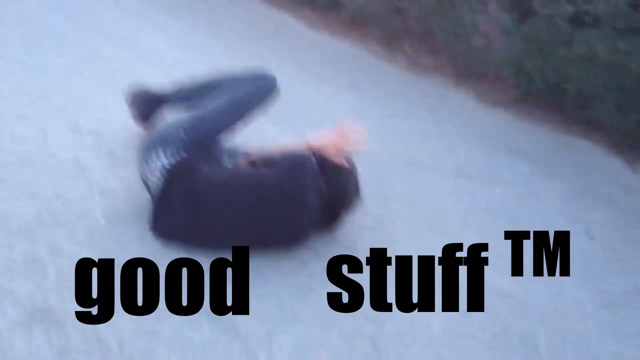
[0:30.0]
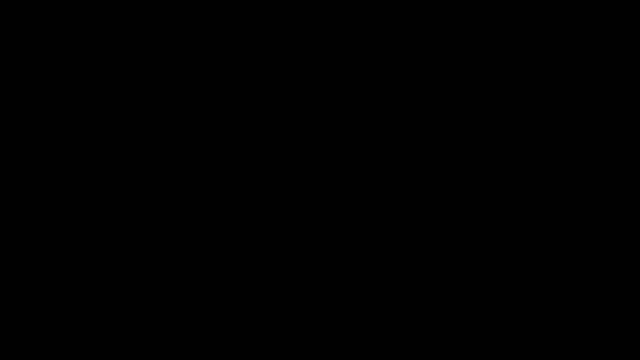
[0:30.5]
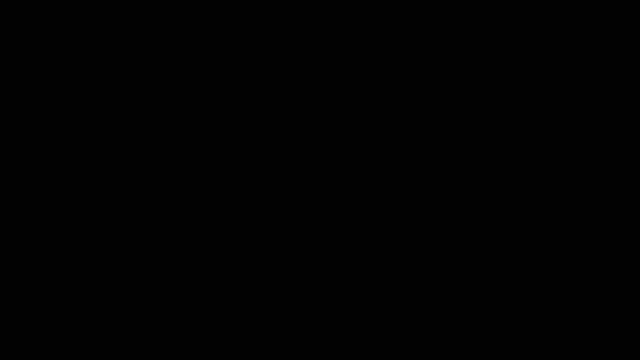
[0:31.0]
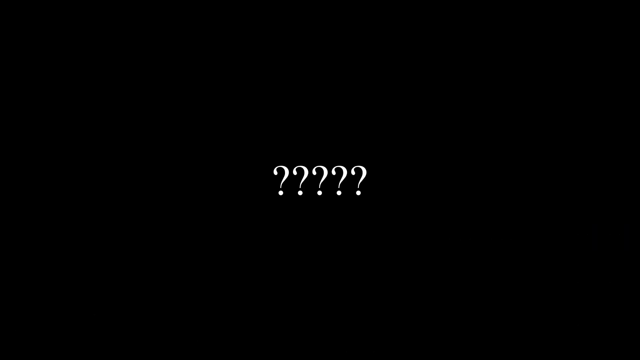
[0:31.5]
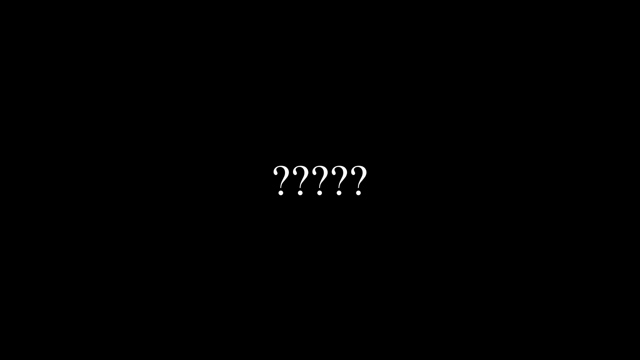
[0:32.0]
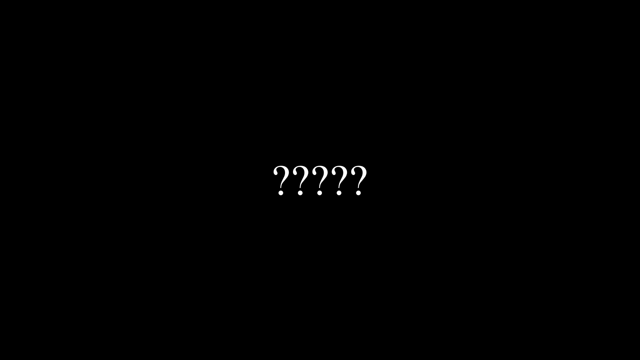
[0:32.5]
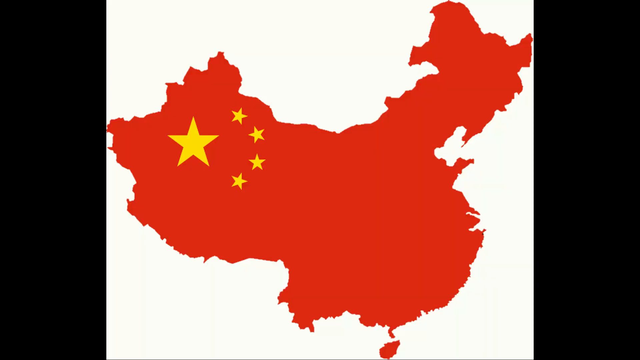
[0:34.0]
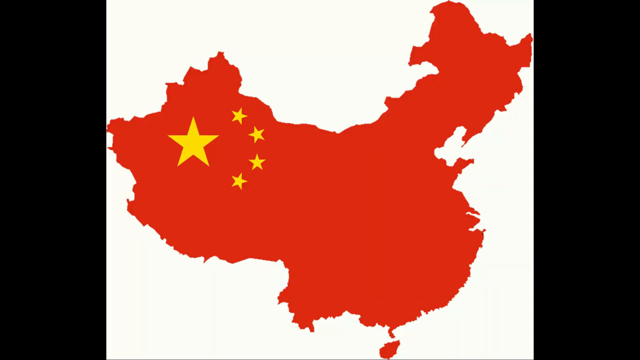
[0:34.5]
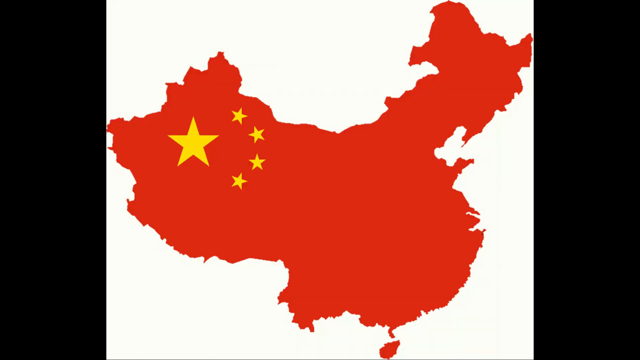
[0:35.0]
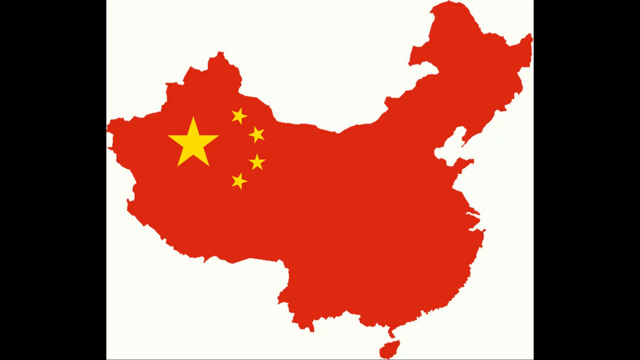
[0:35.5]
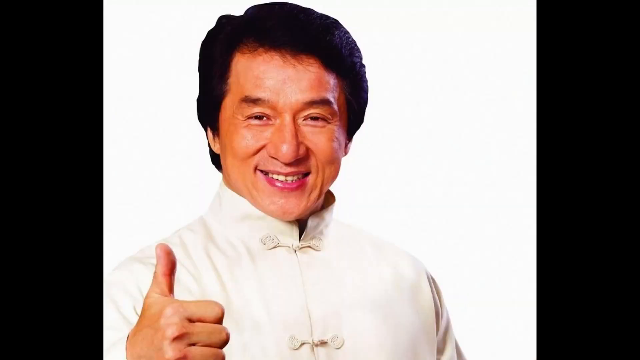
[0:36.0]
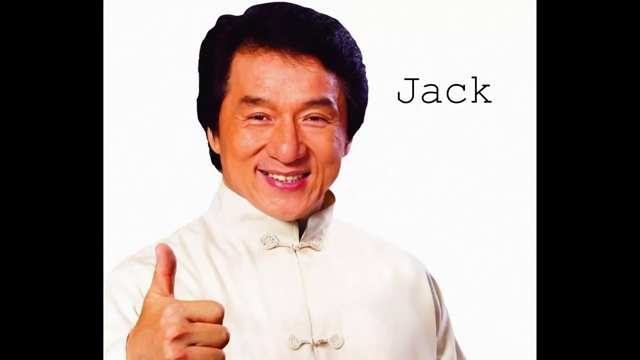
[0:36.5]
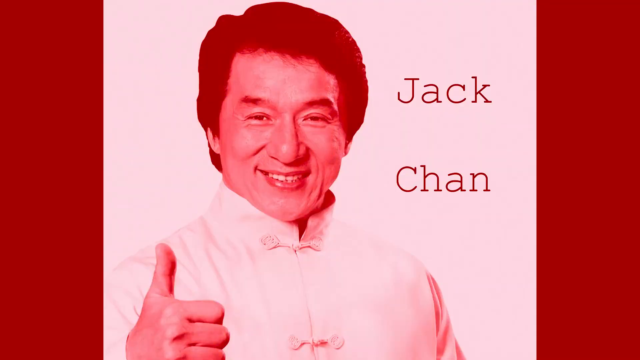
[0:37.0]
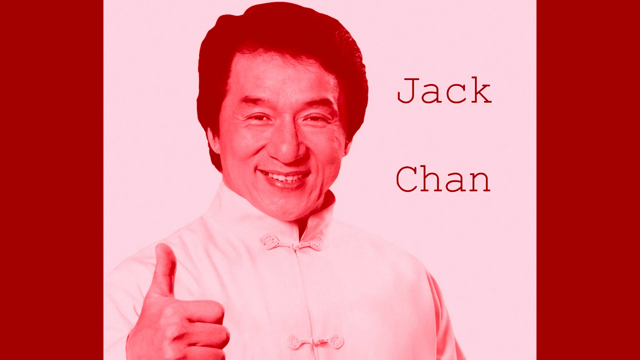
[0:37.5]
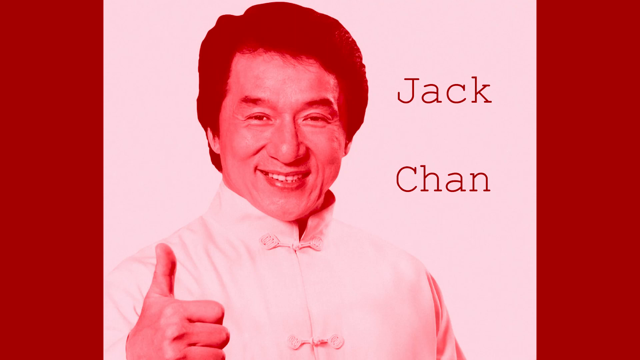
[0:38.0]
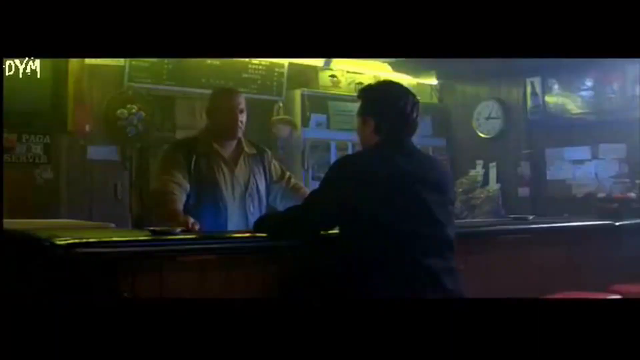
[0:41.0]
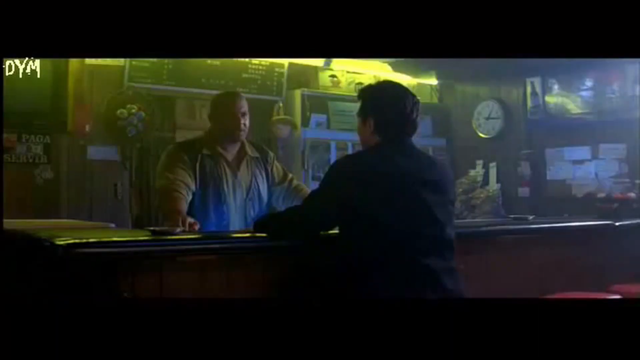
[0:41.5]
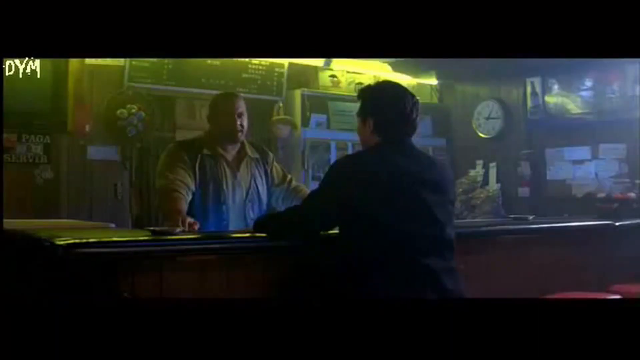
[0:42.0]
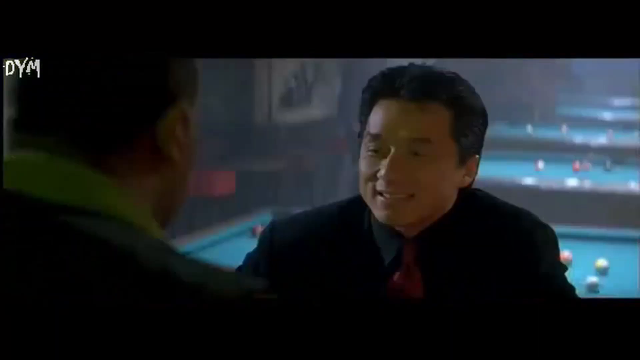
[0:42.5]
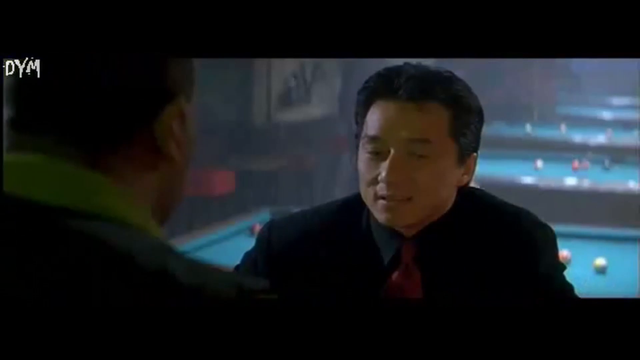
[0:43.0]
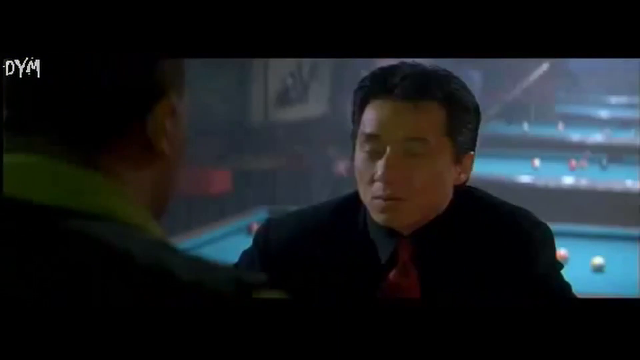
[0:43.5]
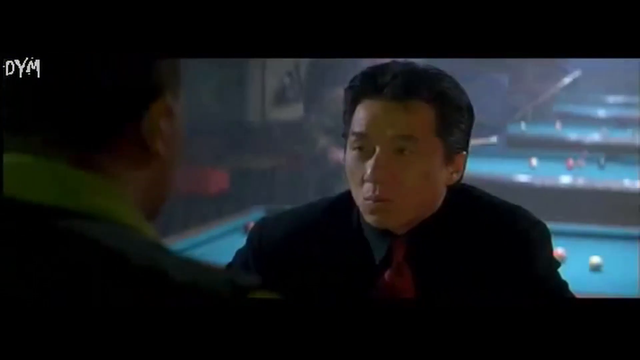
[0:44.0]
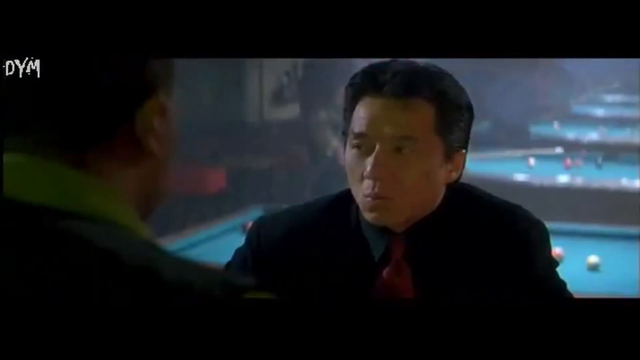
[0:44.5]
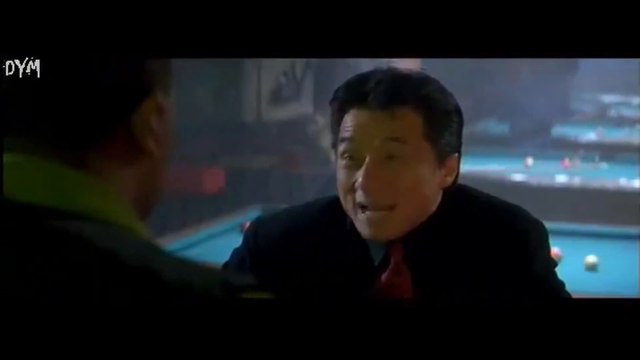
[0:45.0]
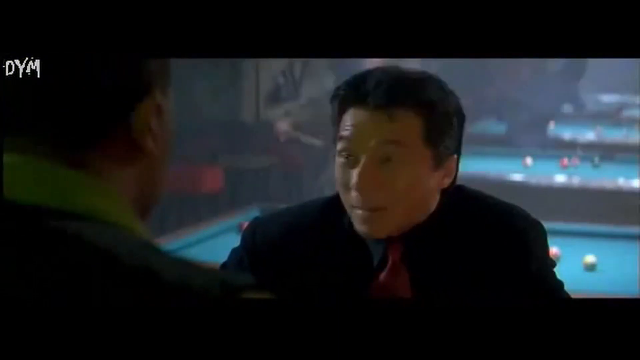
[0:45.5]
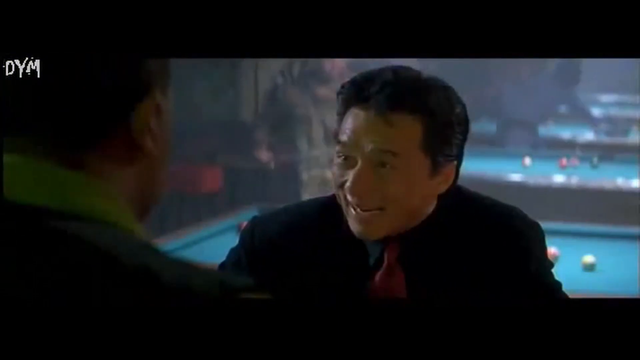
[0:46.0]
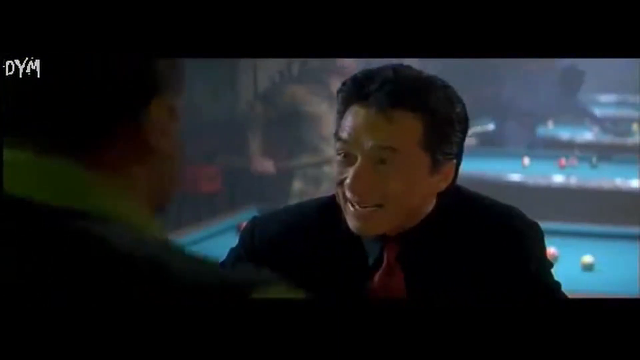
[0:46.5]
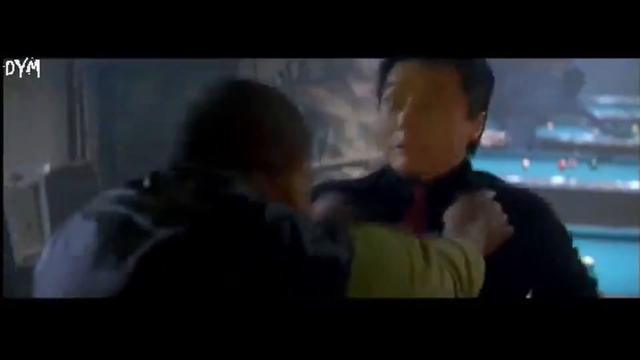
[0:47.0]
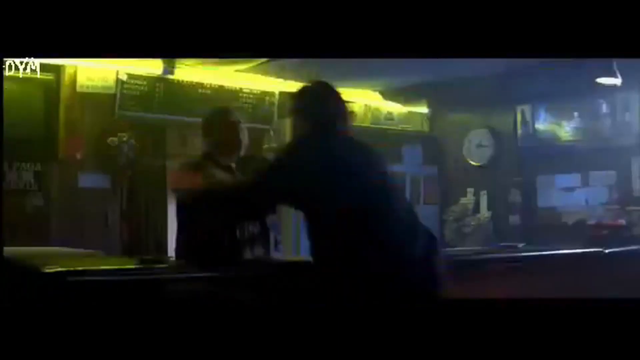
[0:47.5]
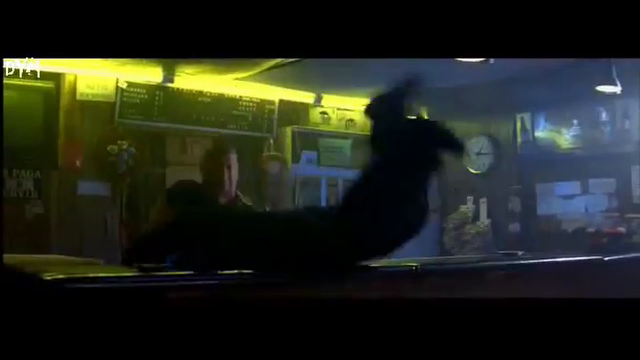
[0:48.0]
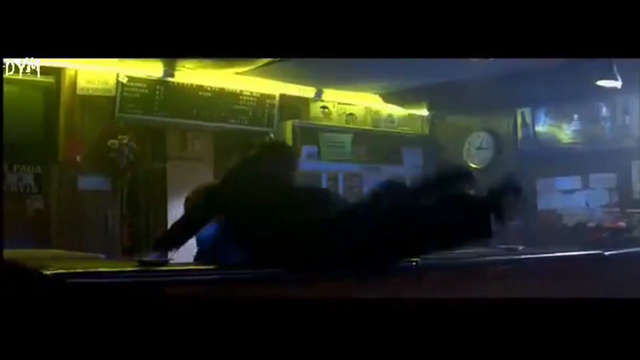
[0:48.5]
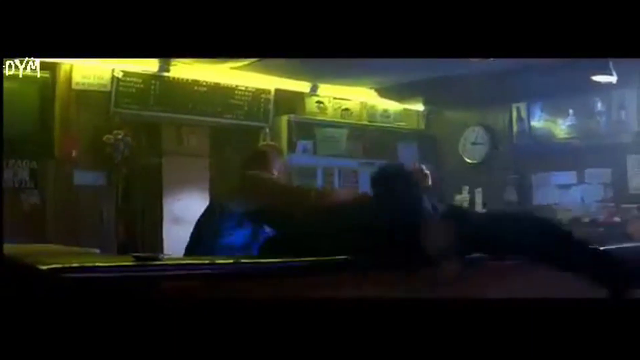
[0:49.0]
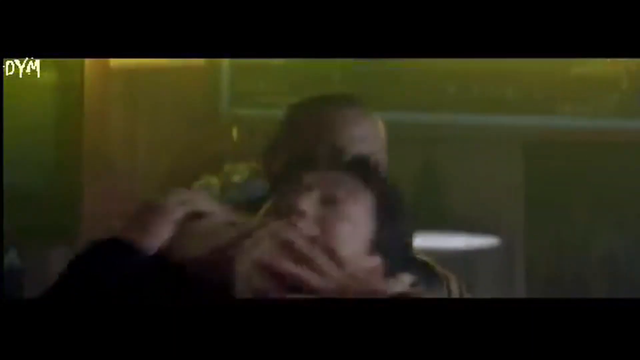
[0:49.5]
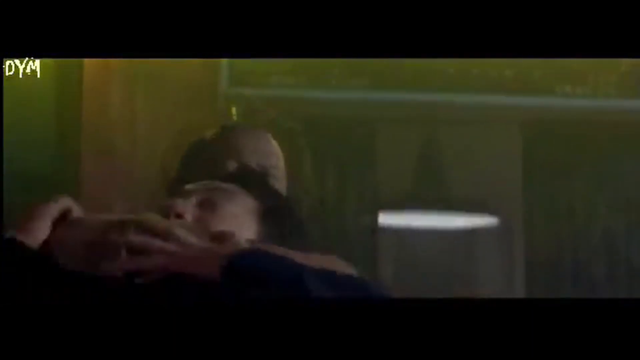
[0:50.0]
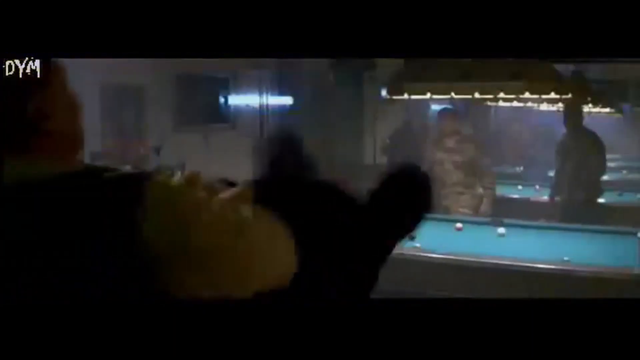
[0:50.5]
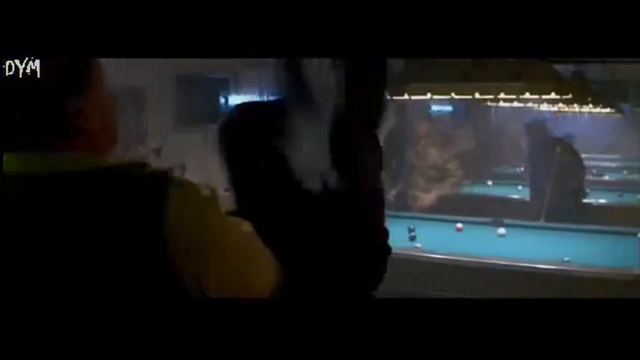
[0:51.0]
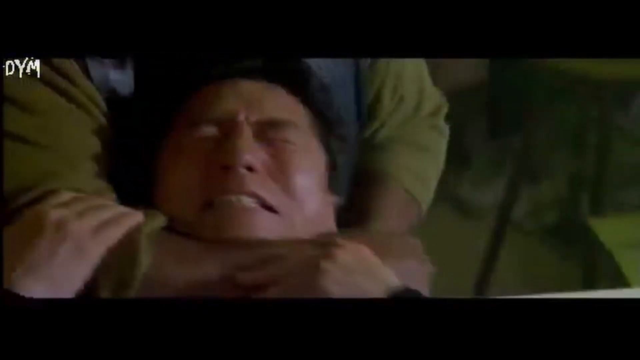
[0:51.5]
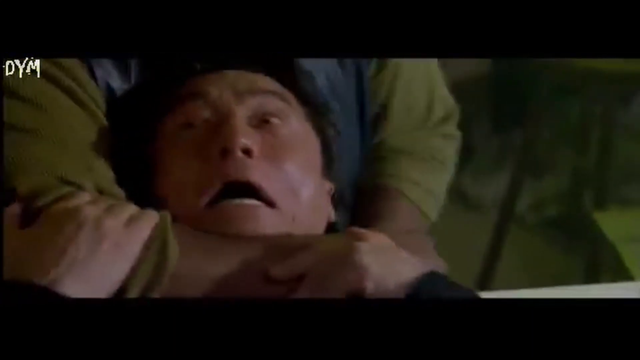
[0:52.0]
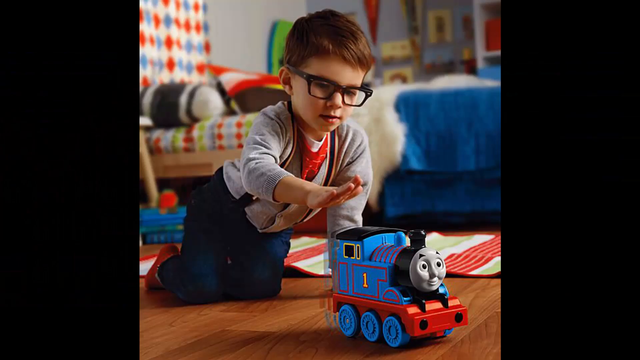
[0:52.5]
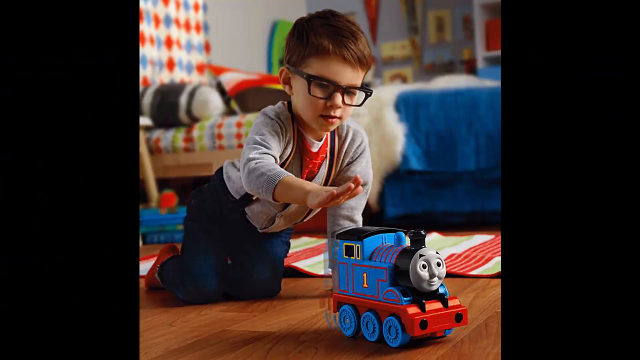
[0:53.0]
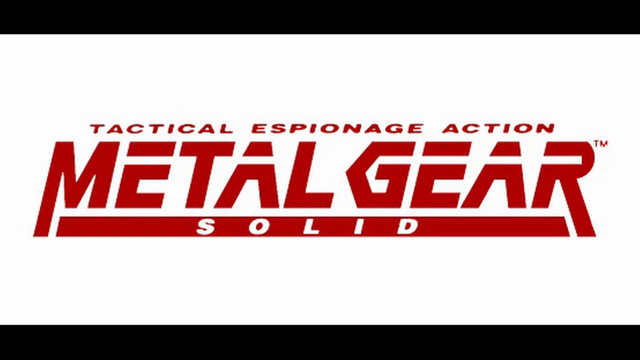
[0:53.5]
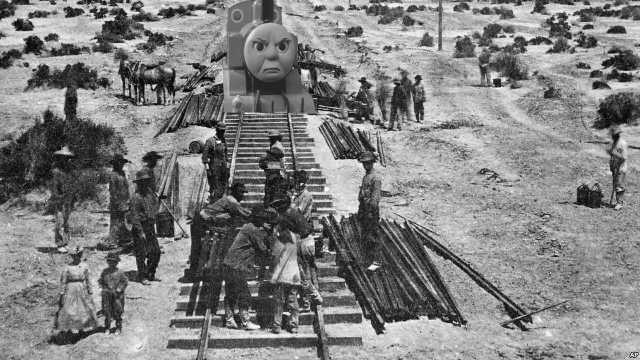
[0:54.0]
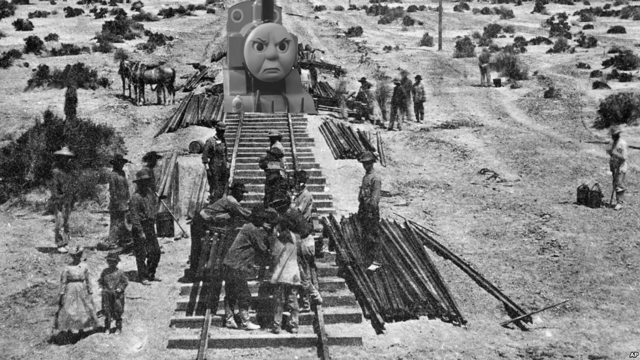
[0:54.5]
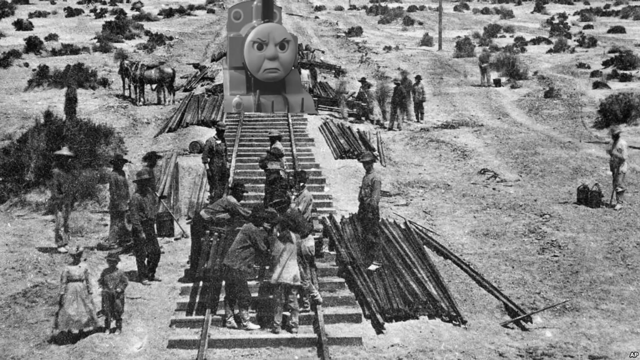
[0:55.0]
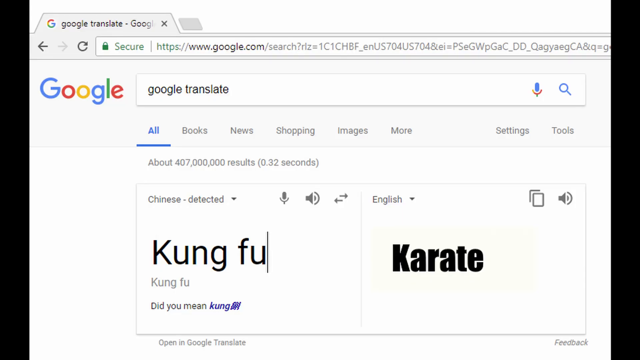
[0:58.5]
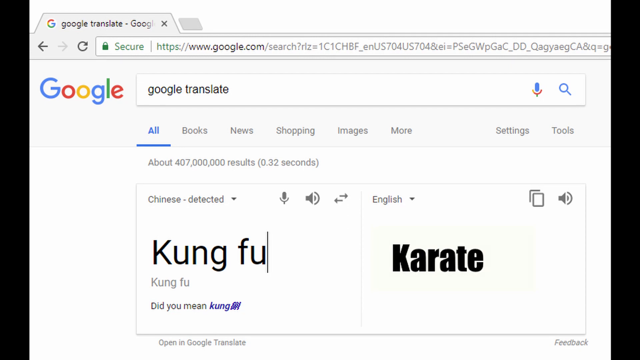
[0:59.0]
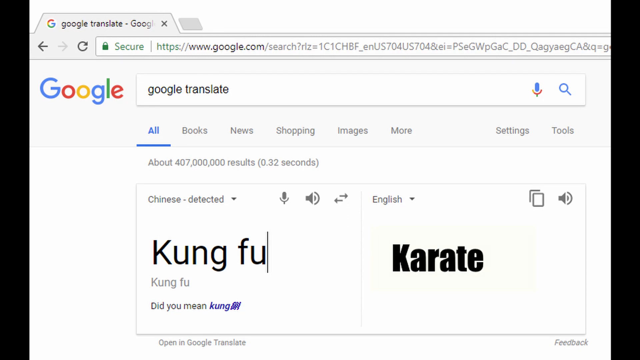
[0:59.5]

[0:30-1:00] A red map appears with stars: one big star surrounded by four smaller stars. Jackie Chan is shown smiling. A man is at a bar; this is Jackie Chan, who is then pulled over by a black man. A child plays with toys. Trainees and old people from old times appear. A Google Translate search is shown, translating Kung Fu Panda. The video seems to be a series of clips from familiar series, movies and cartoons.